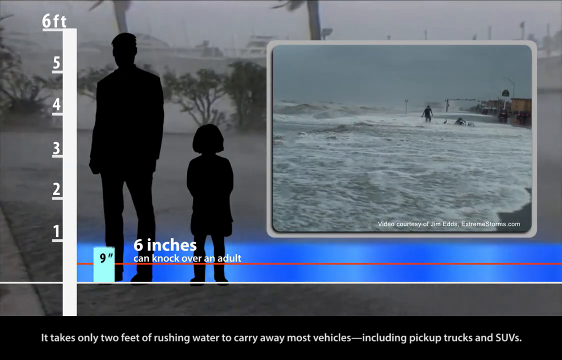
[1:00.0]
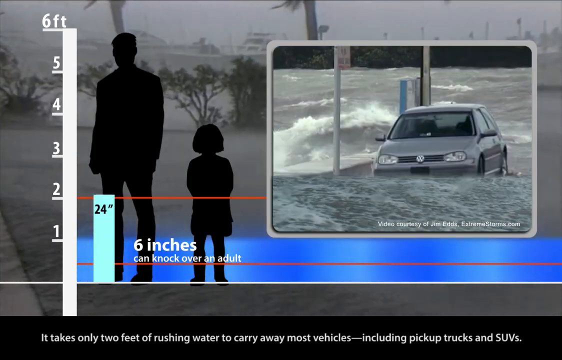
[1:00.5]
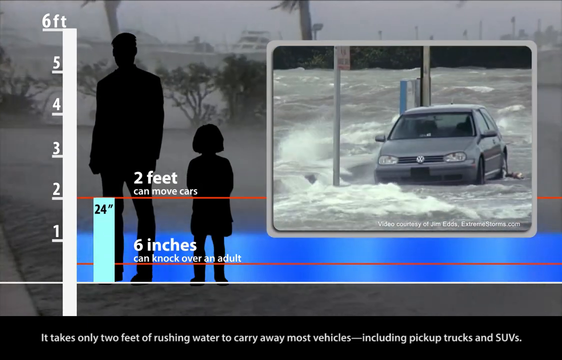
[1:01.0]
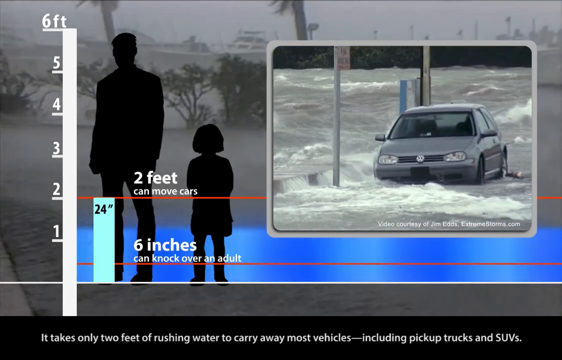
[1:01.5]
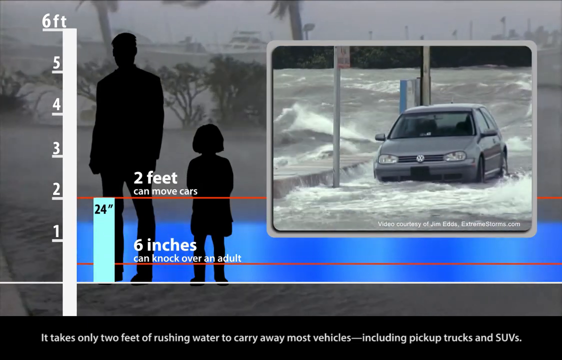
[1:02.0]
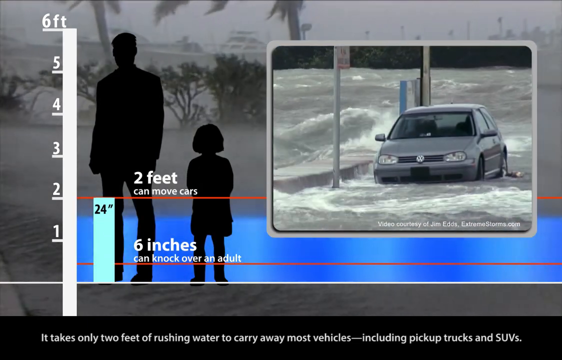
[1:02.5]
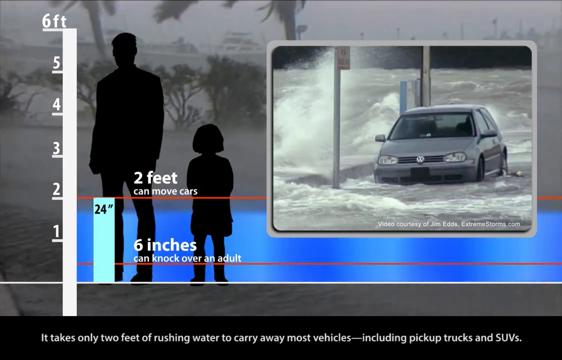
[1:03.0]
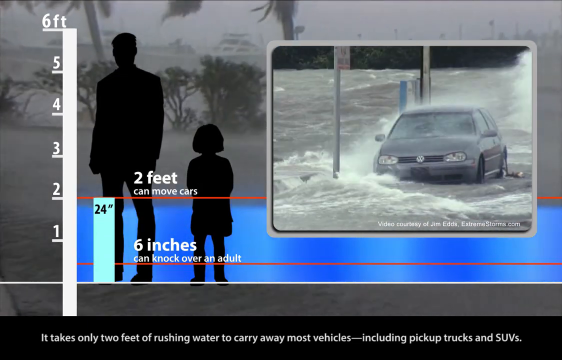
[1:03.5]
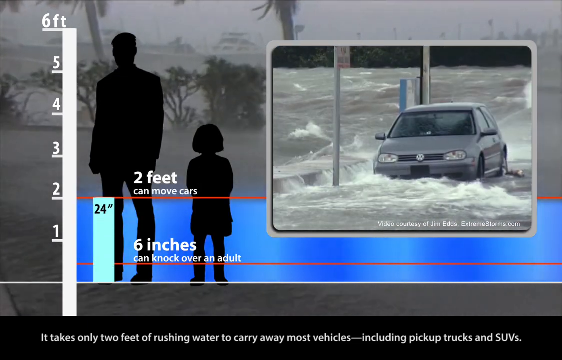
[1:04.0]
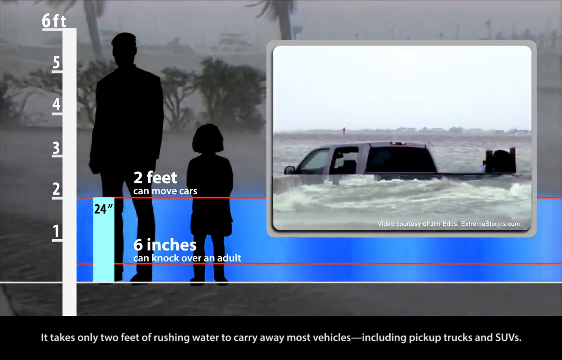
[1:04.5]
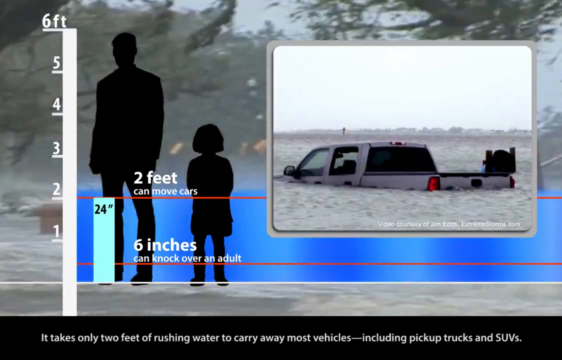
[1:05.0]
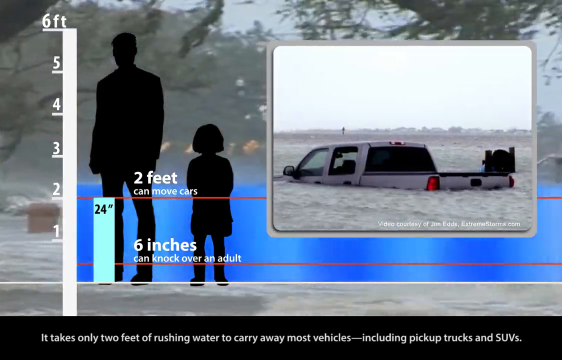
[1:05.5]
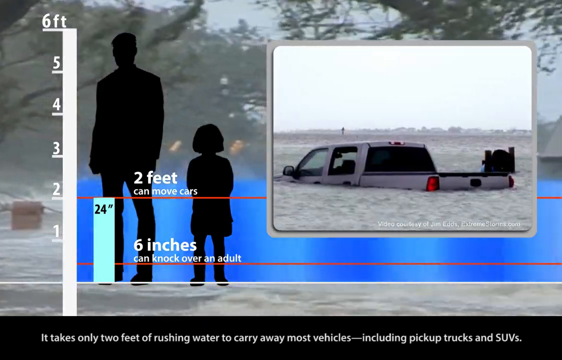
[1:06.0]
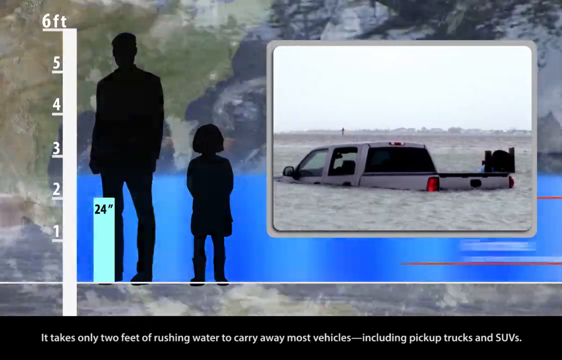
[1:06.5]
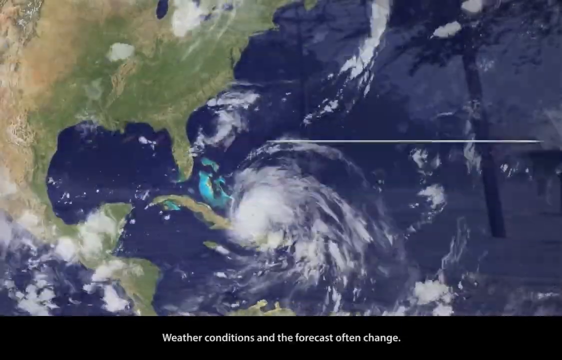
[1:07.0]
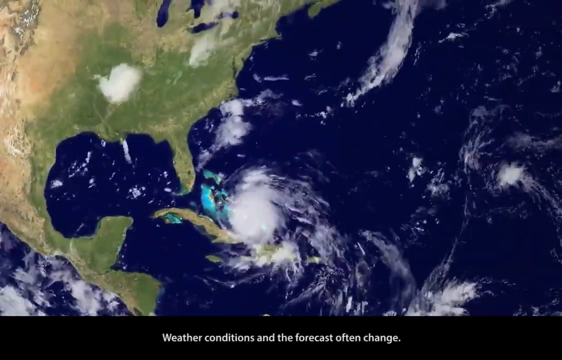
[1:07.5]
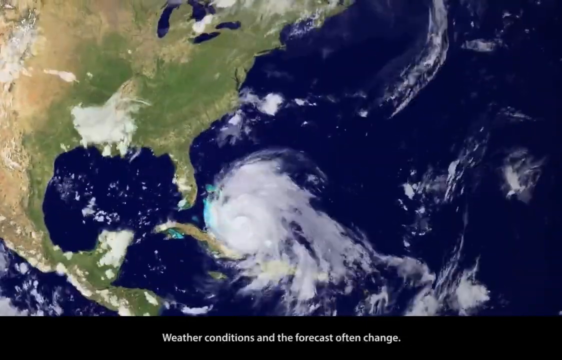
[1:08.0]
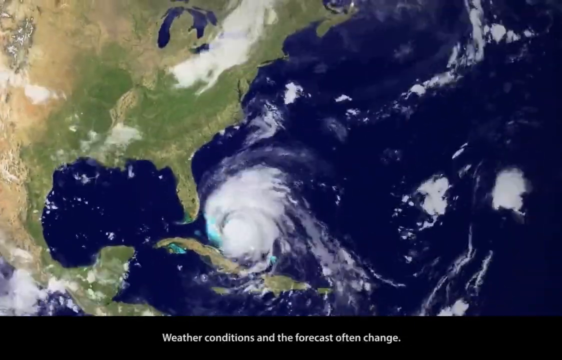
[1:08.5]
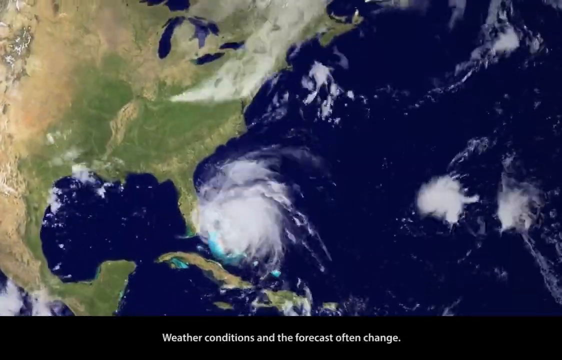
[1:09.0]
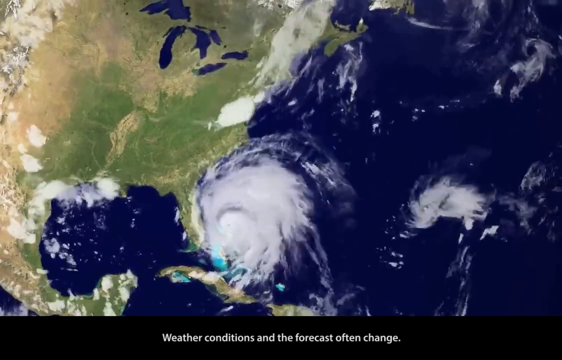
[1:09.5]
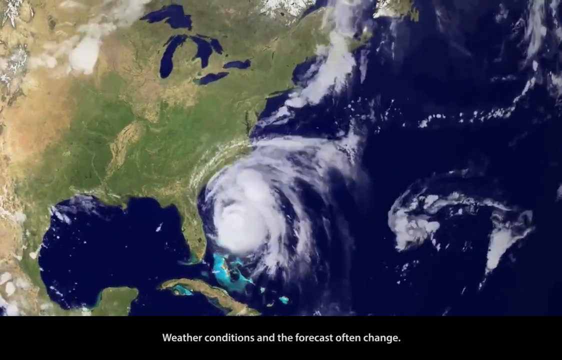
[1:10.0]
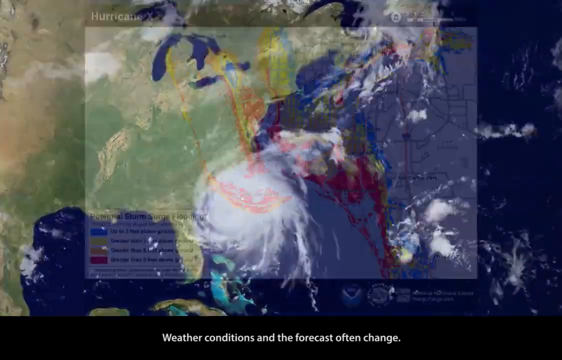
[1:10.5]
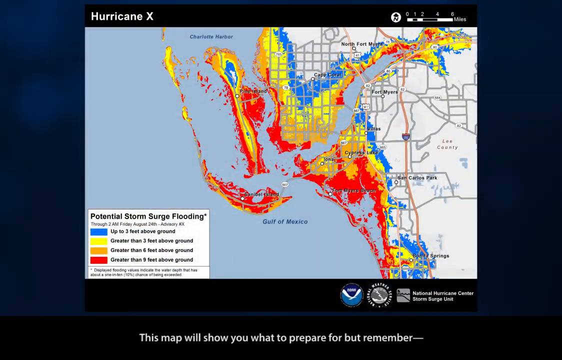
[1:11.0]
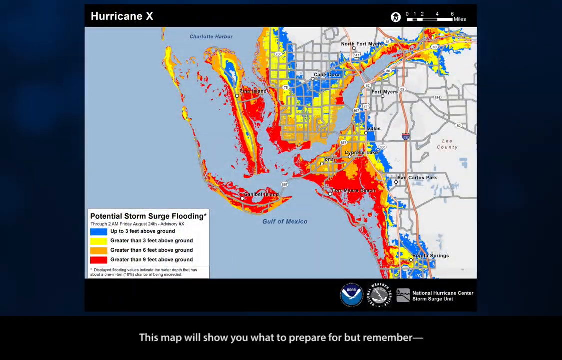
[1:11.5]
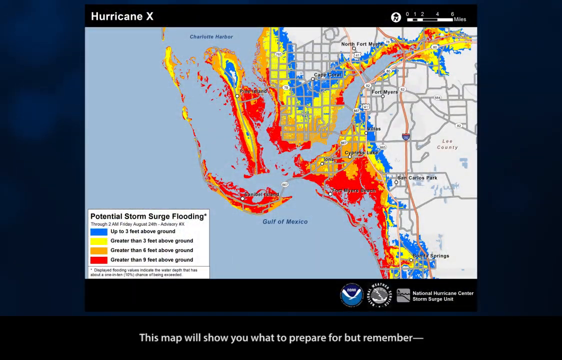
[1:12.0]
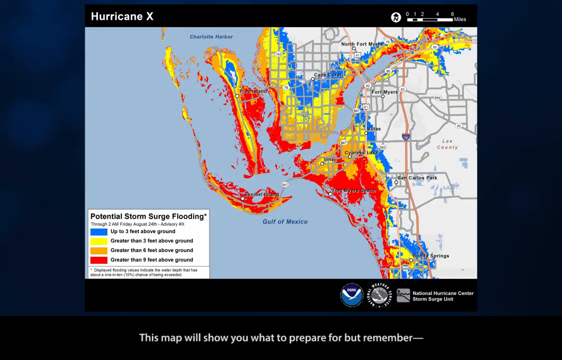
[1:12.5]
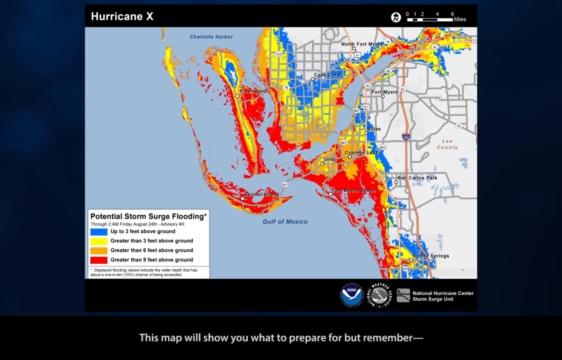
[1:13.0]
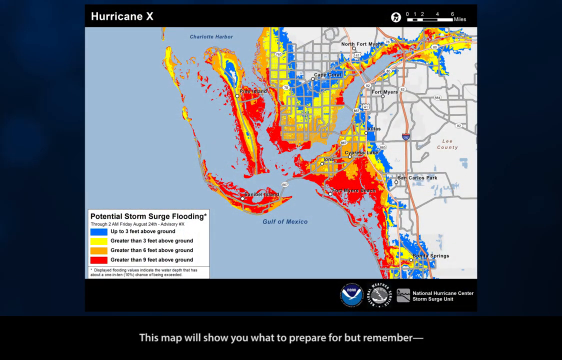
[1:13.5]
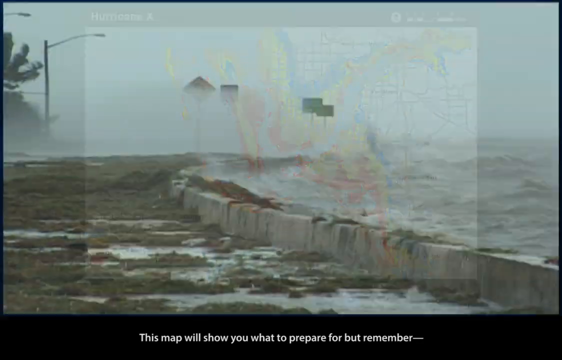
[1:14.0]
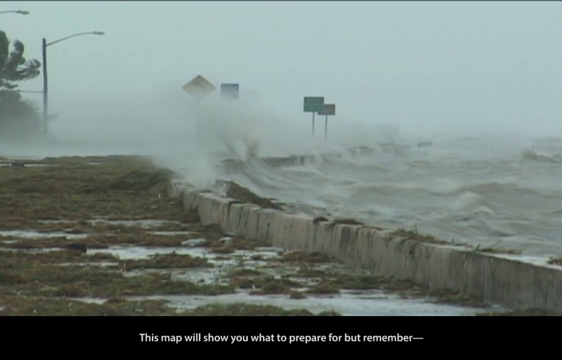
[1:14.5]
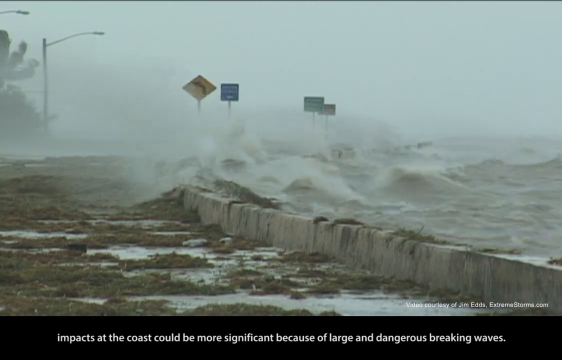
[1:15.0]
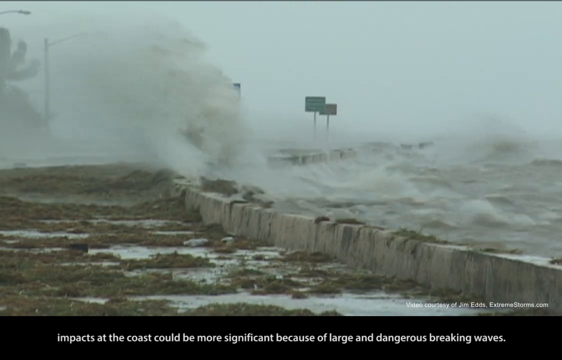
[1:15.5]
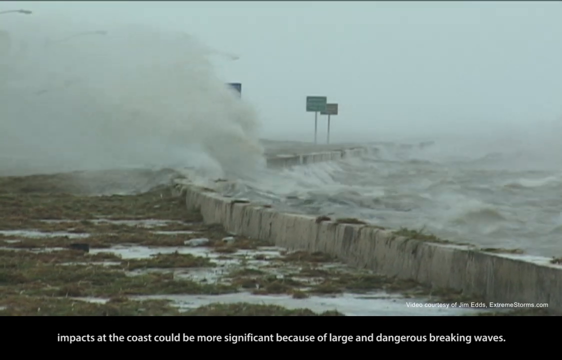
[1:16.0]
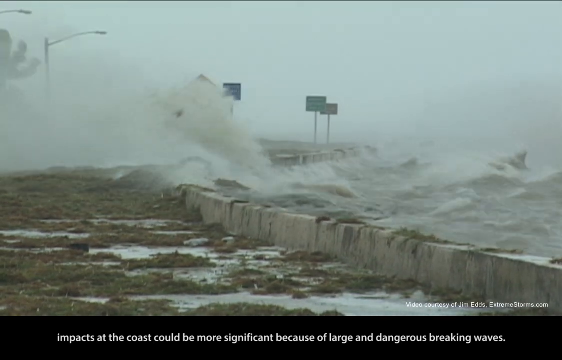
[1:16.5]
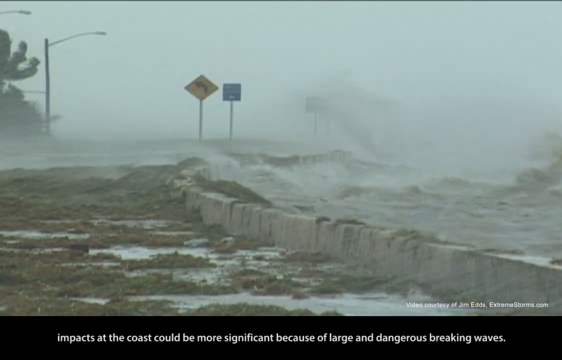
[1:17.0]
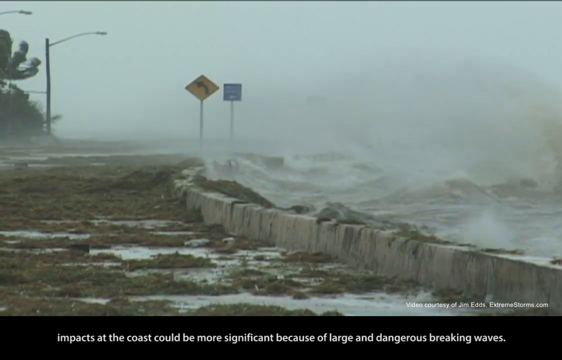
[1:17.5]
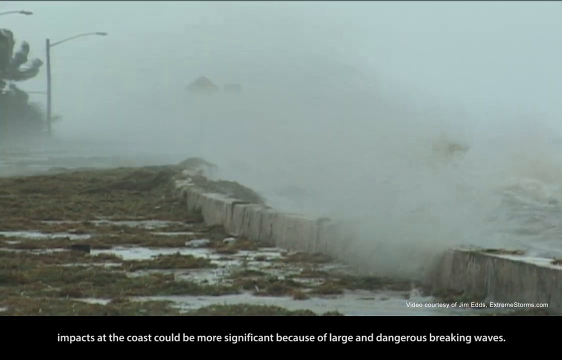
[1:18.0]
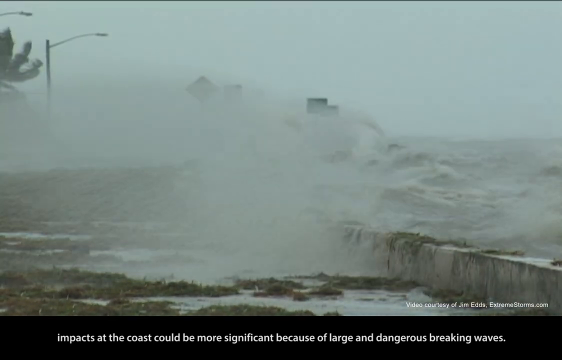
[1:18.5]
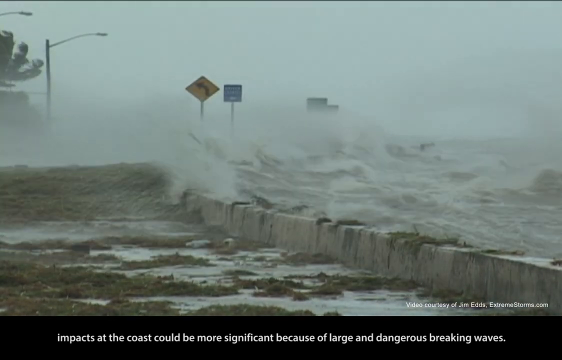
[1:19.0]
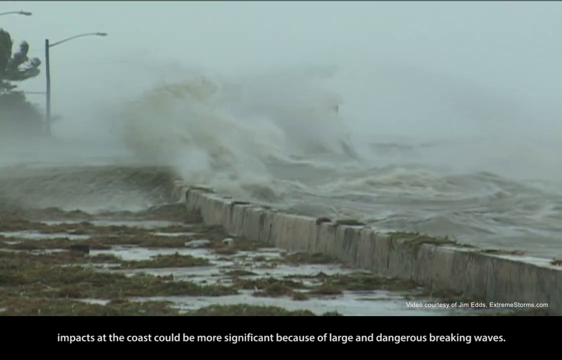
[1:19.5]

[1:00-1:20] Silhouettes of two people appear: a six-foot man and a three-foot young girl, with trees and boats in the background. Text says "six inches can knock over an adult," and in a little square people riding their bikes are knocked down by the water; about 10 people are knocked off their bikes by the surge. "Hurricane X" is at the top left. An abandoned gray Volkswagen is covered up to the tires, and a truck is covered up to the bed. A map has wind moving on it in red, yellow, green and blue. Water comes over a wall, hitting signs and the wall and flooding the area; the surge hits the wall so hard it breaks apart. Where the wall is hit there is a yellow sign with a turn signal, a palm tree sways, and cars are covered or getting covered by the surge. The silhouettes return, with the gray car getting beaten and the truck covered up to its bed, and then the map returns.